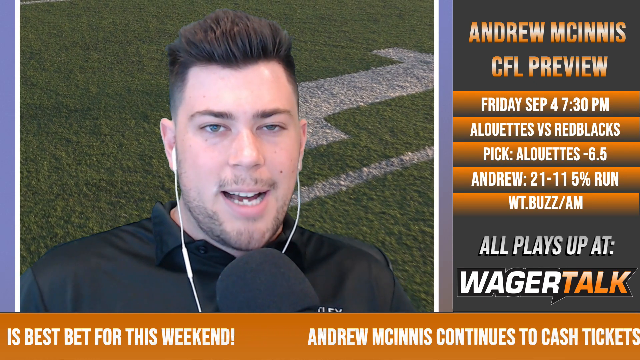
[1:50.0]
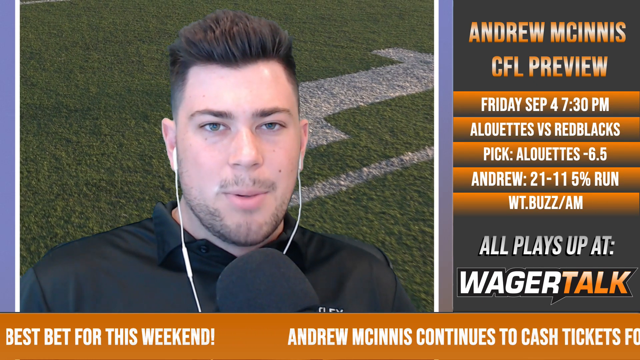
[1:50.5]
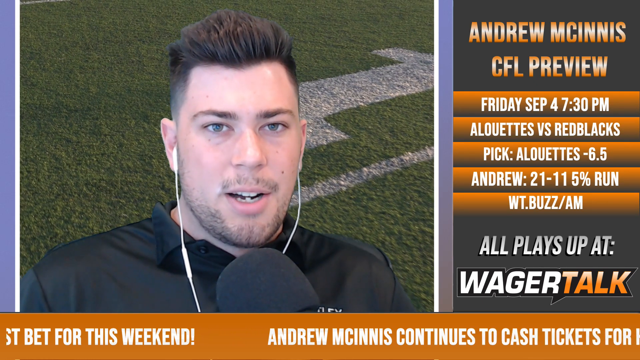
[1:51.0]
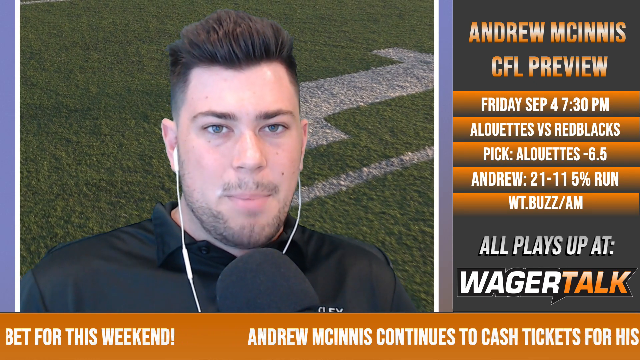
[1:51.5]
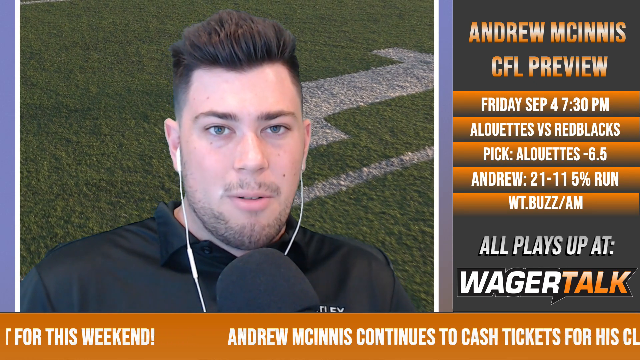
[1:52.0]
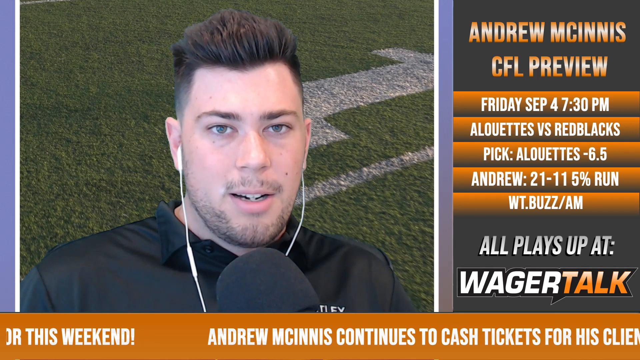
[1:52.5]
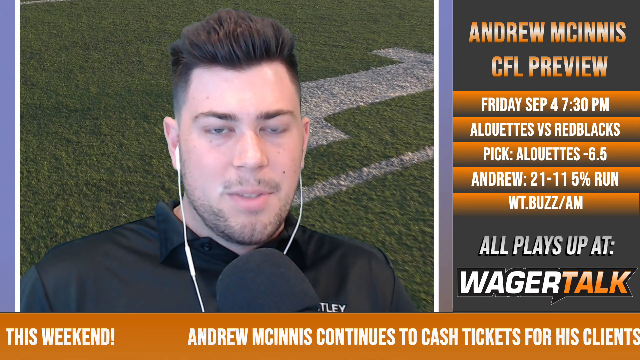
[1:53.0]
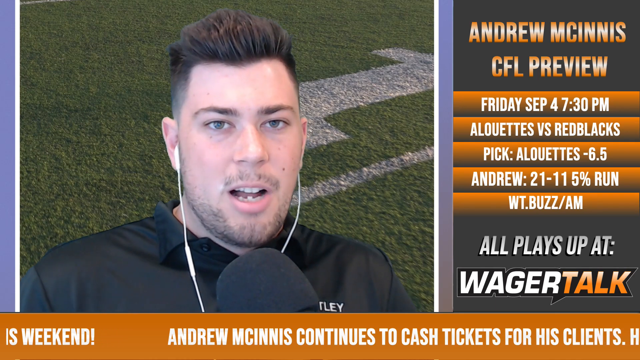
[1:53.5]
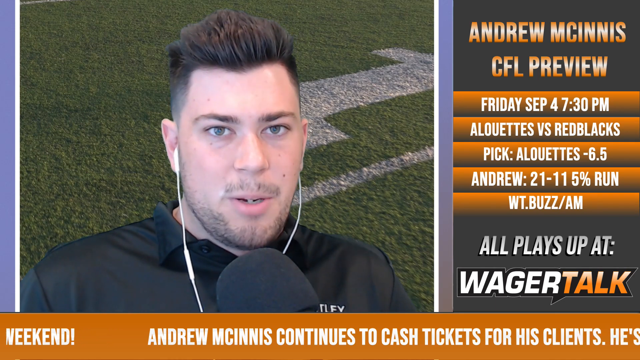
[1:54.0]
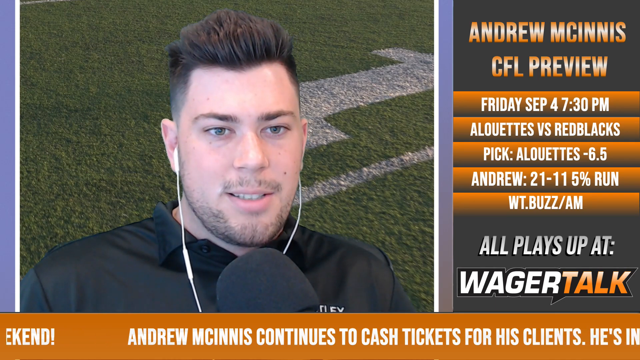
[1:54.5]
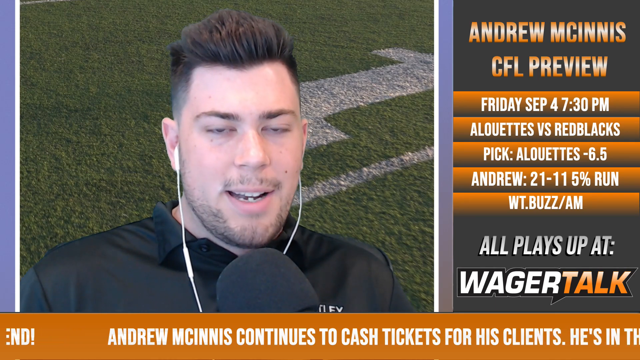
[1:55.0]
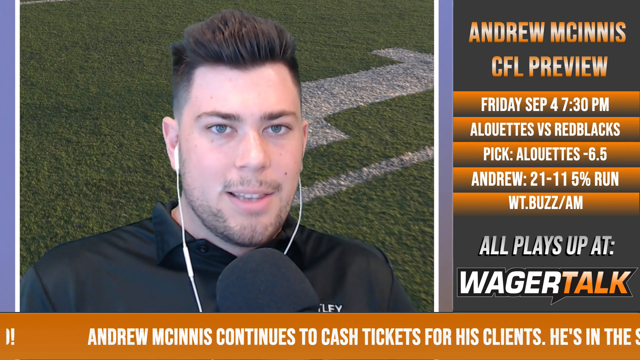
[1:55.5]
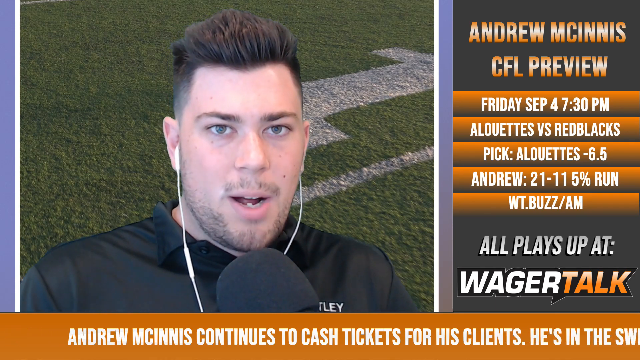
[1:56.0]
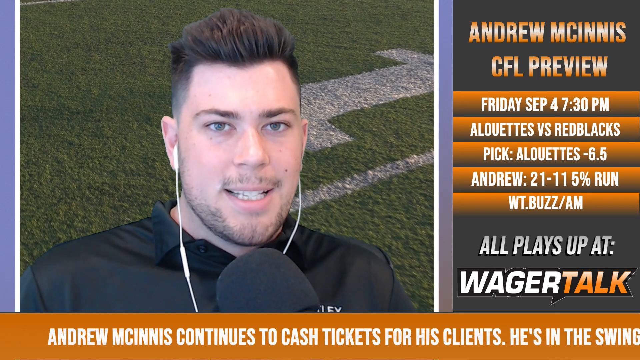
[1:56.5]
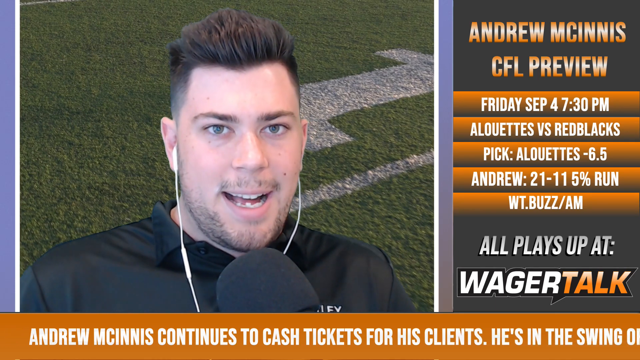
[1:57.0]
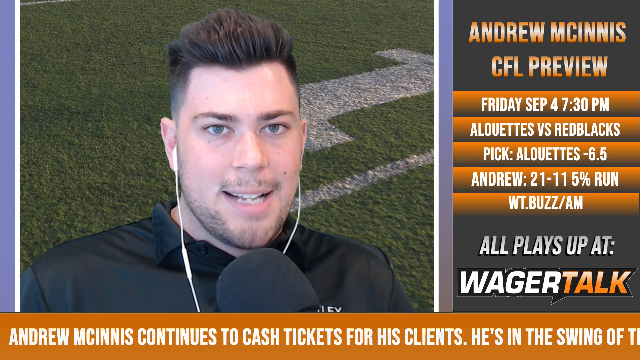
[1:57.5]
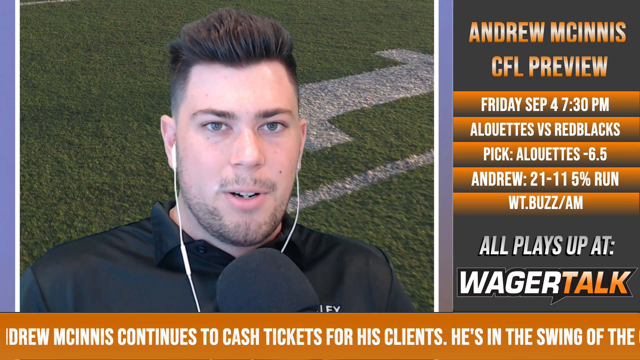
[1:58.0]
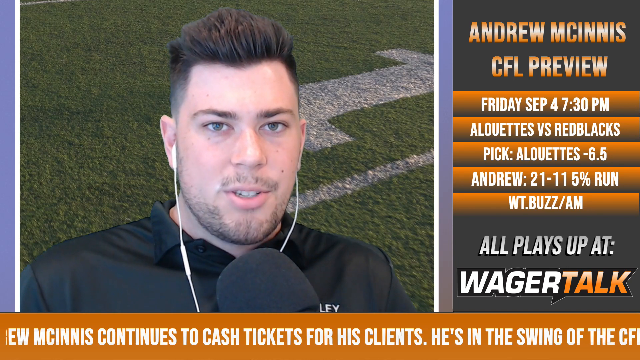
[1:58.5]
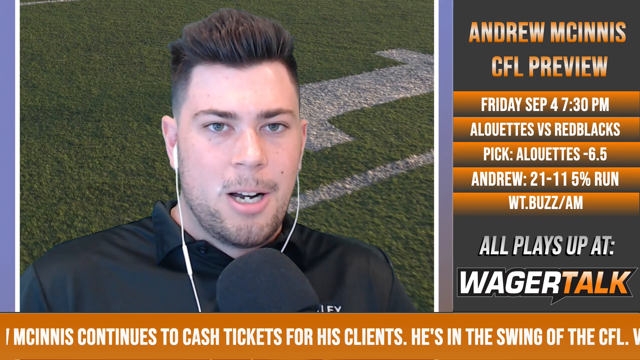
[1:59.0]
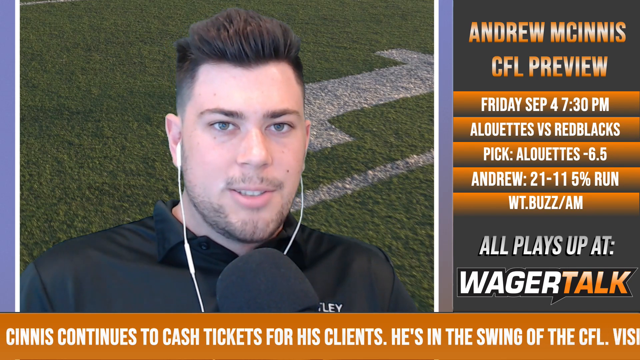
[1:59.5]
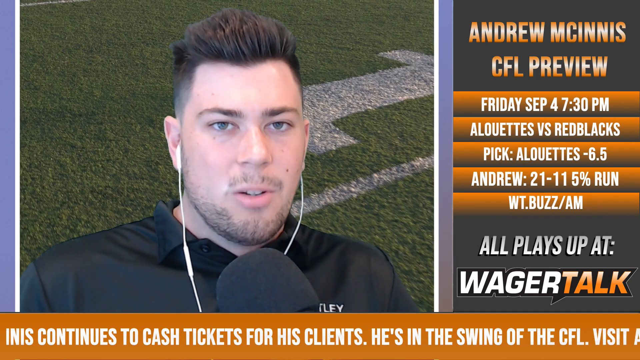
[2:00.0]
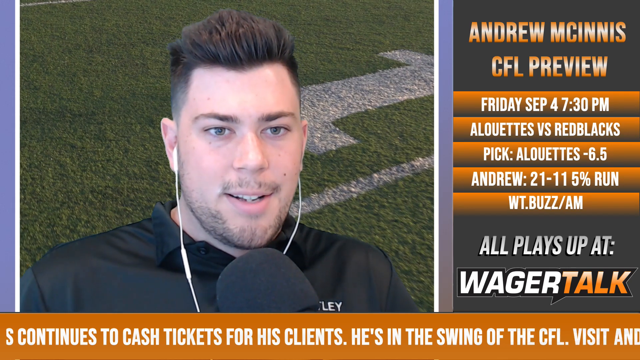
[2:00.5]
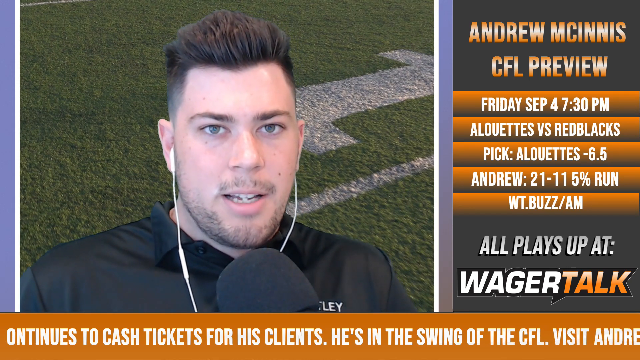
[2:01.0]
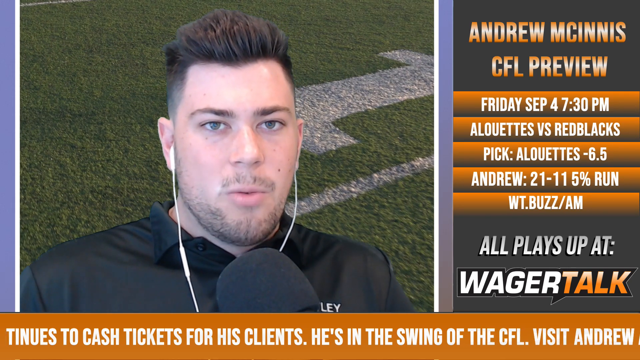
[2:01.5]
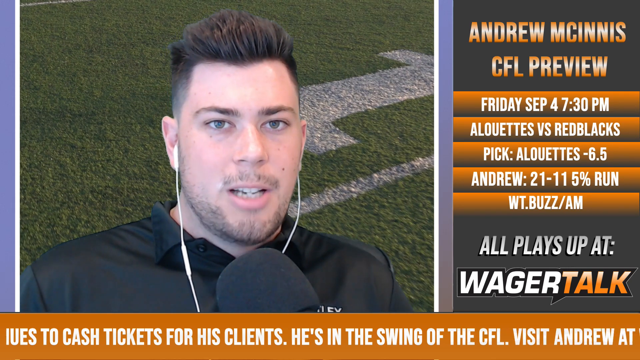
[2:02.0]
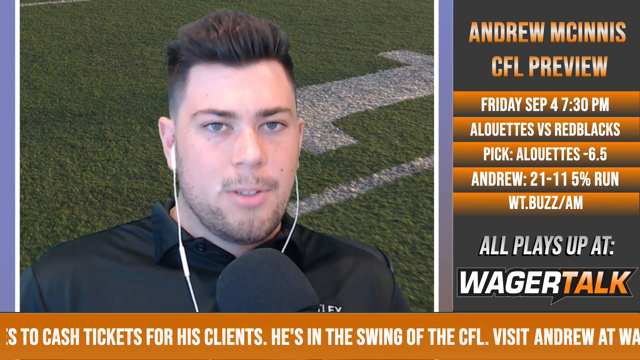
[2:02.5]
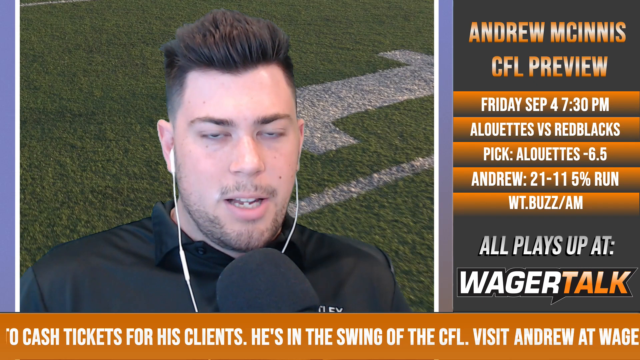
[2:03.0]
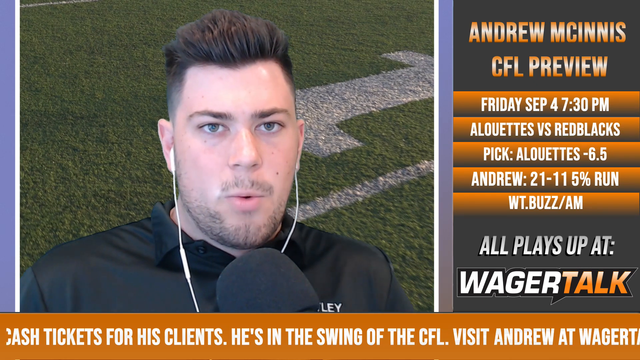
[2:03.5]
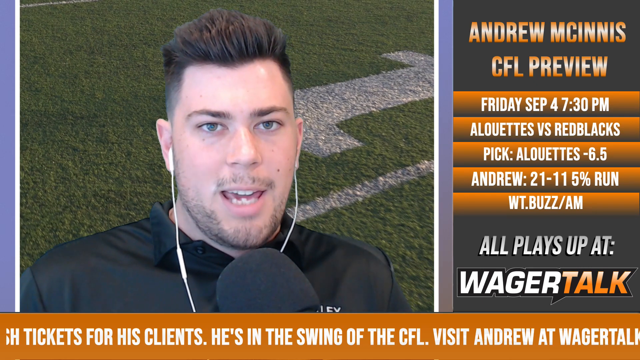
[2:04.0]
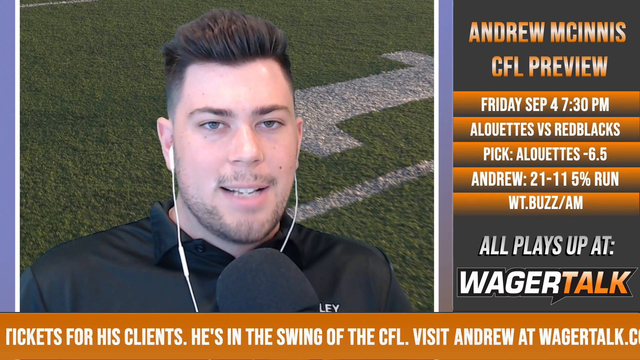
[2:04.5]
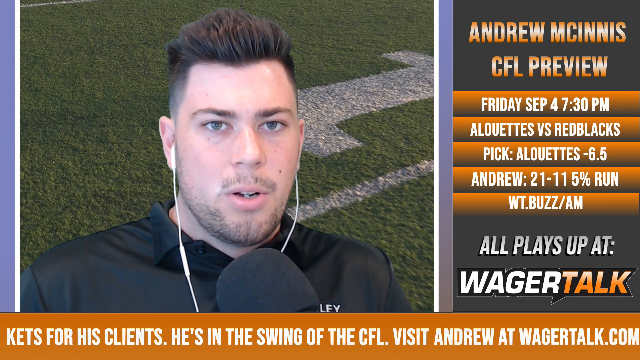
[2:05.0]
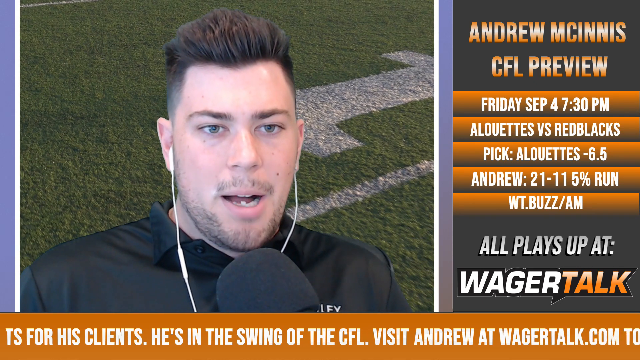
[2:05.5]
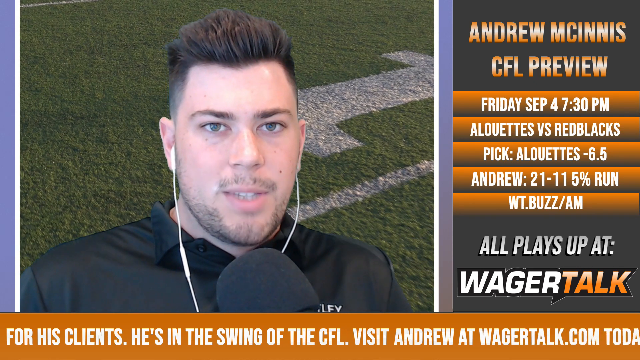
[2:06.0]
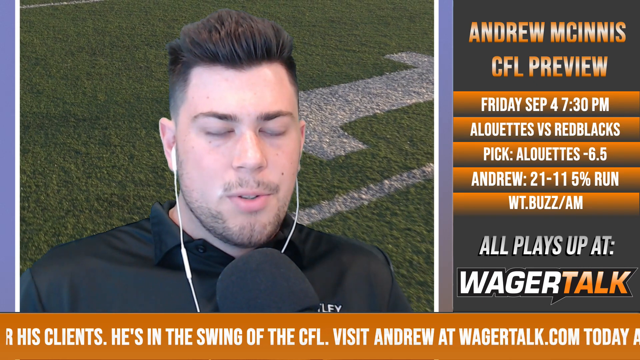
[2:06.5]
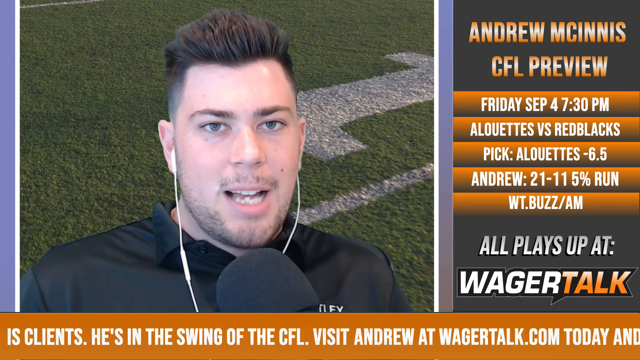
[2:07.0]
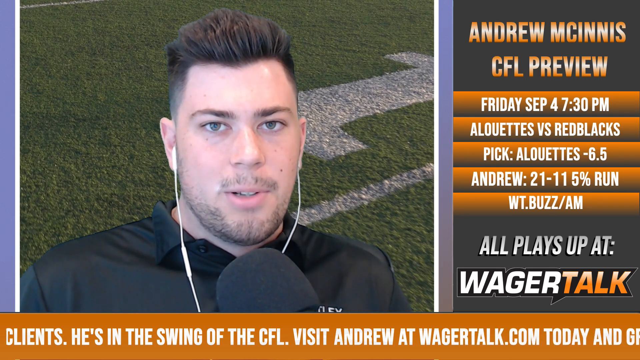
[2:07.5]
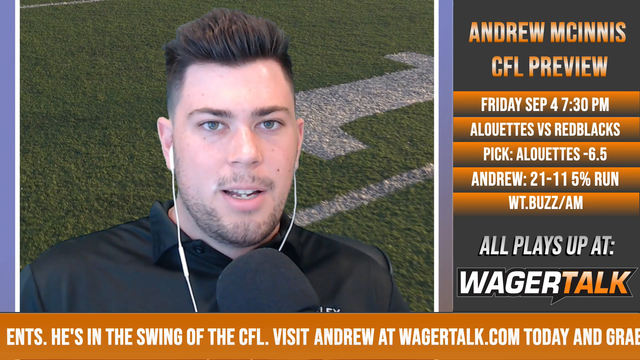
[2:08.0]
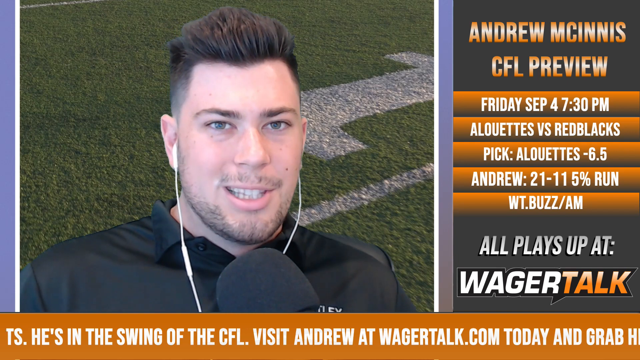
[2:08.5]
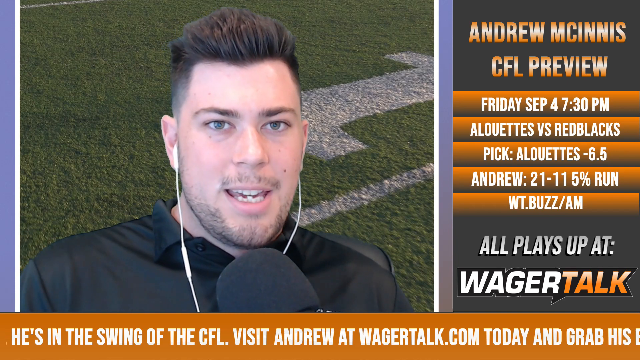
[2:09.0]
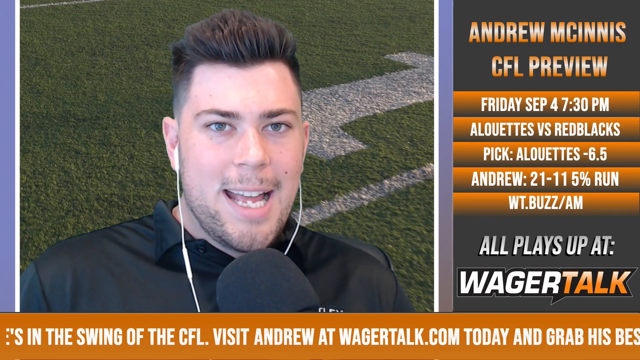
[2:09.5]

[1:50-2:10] A man who looks probably to be in his 20s, with really smooth skin and some stubble on his face, is being interviewed and answering questions, talking into the microphone. While talking he kind of looks down a lot and shakes his head a little. His expression appears calm, neither particularly happy nor upset. He blinks often, in rapid blinks. The video gets a little pixelated, and he shrugs his shoulders up and down a little while answering. He wears wired earphones in both ears.